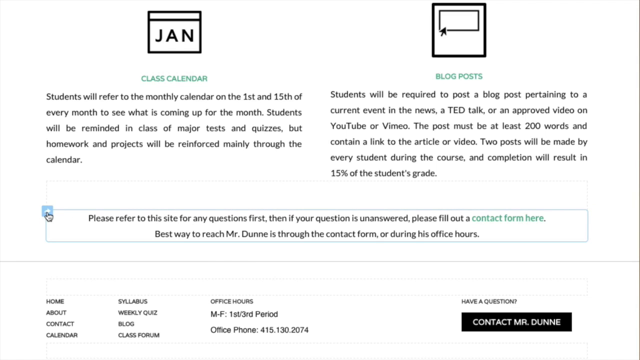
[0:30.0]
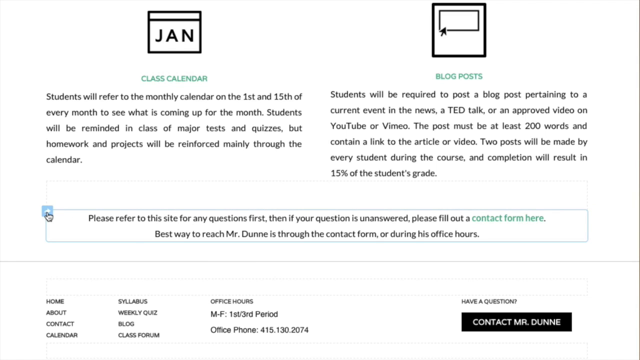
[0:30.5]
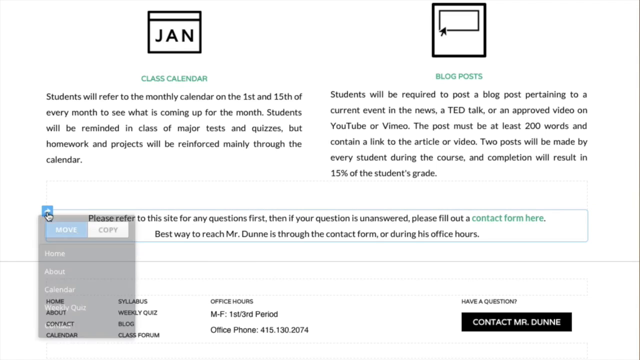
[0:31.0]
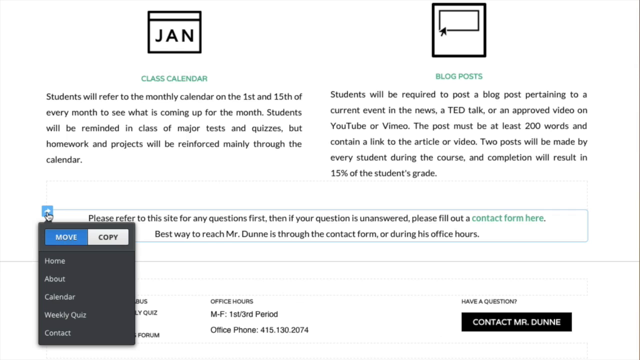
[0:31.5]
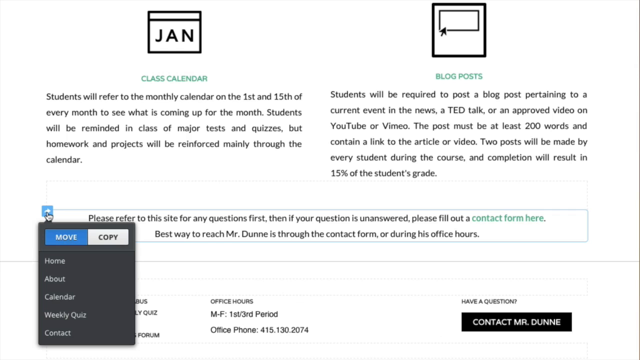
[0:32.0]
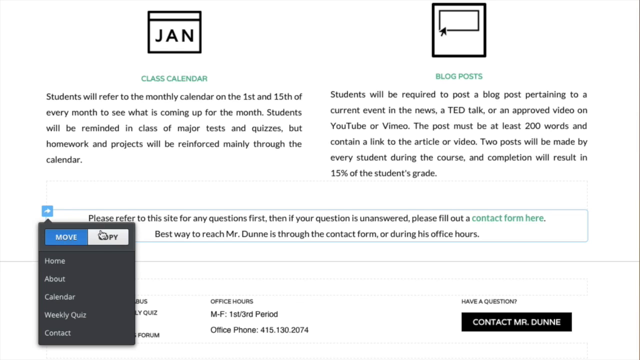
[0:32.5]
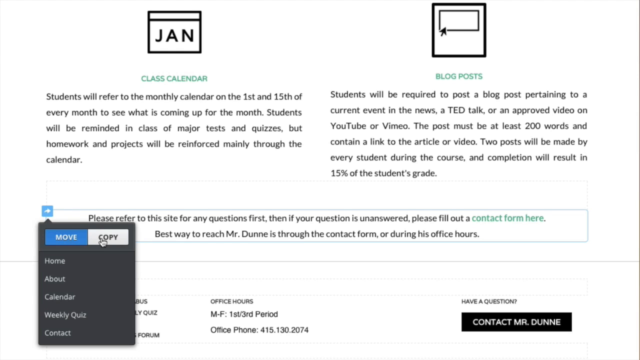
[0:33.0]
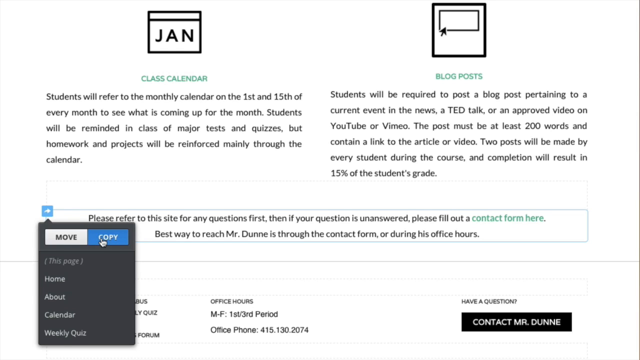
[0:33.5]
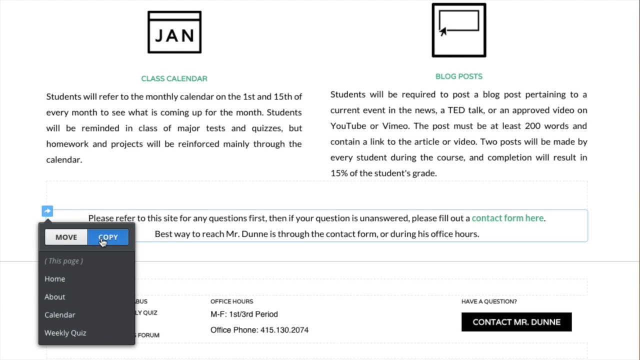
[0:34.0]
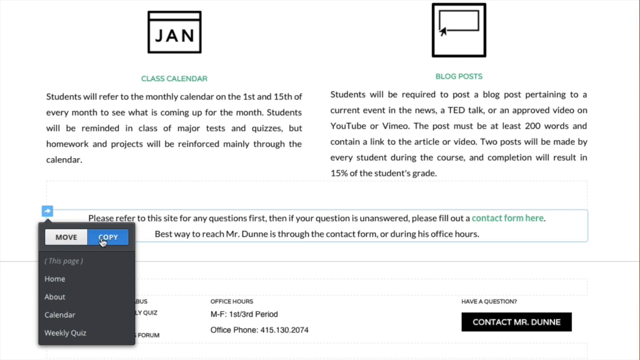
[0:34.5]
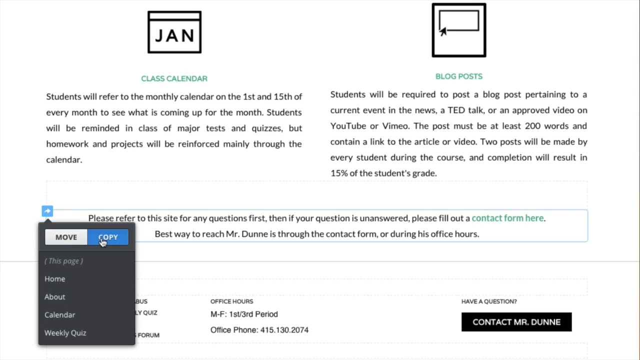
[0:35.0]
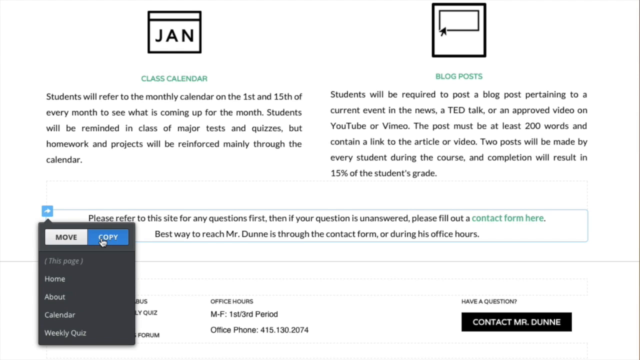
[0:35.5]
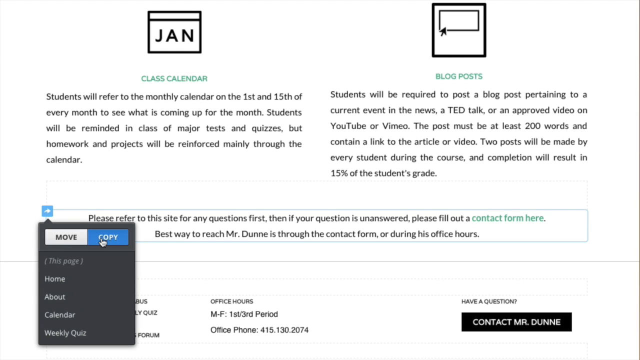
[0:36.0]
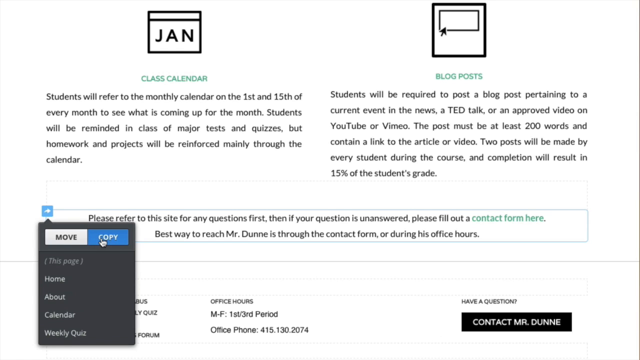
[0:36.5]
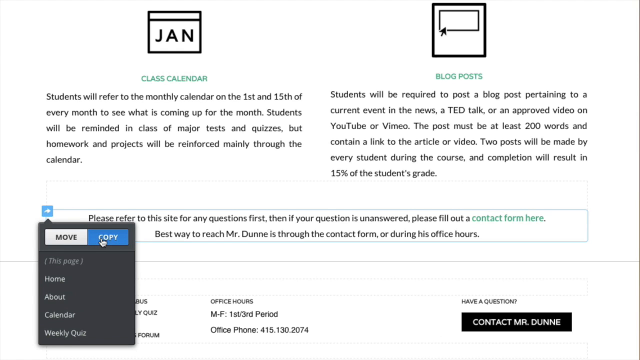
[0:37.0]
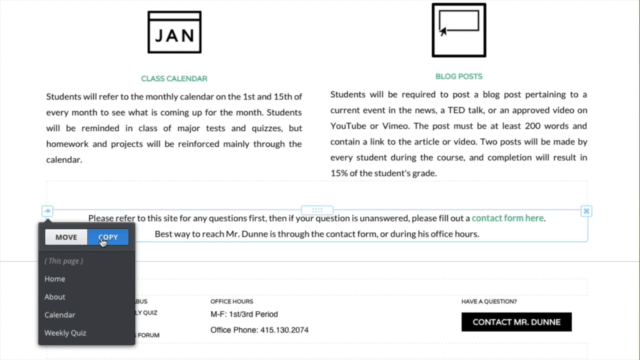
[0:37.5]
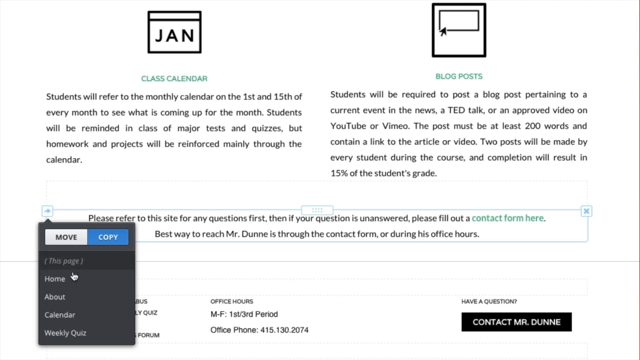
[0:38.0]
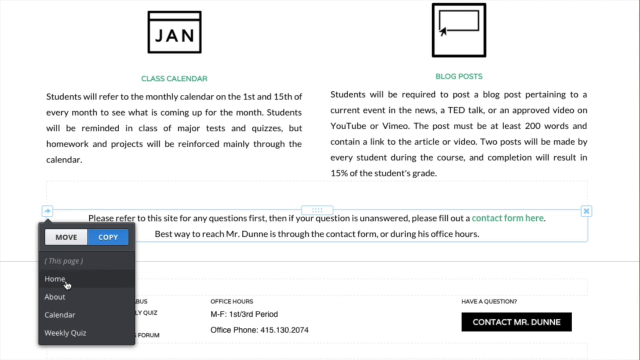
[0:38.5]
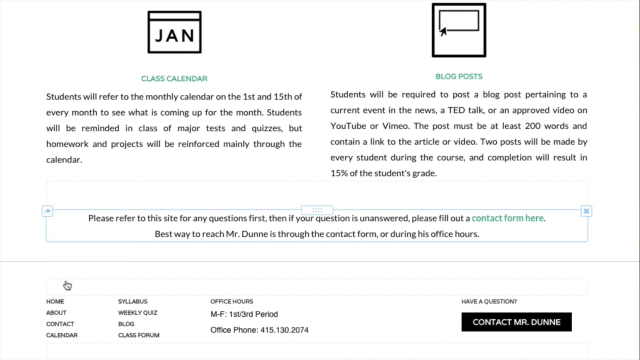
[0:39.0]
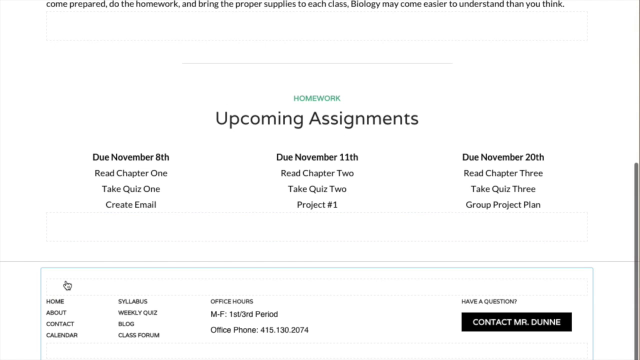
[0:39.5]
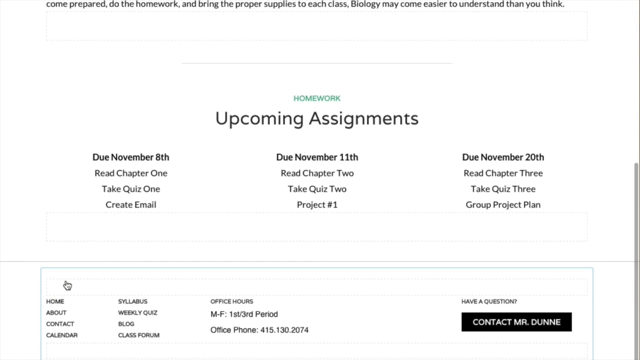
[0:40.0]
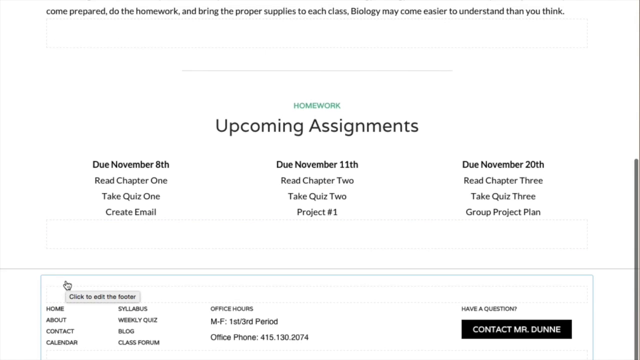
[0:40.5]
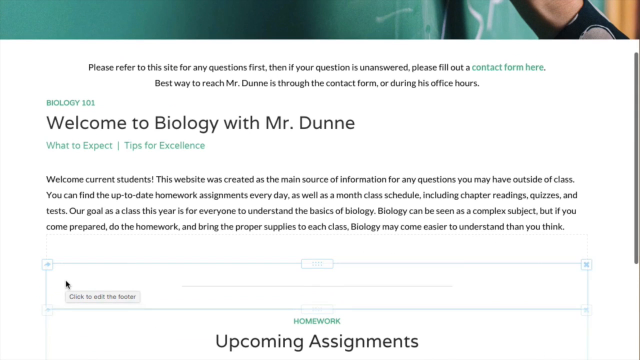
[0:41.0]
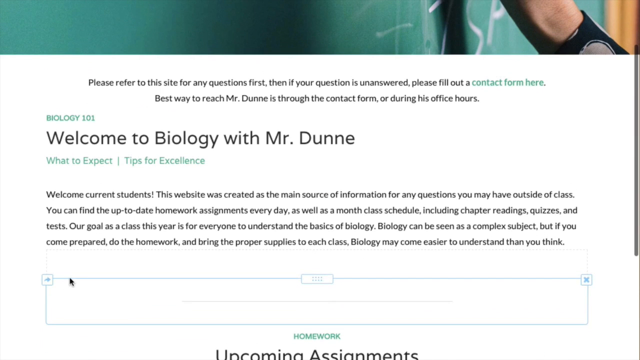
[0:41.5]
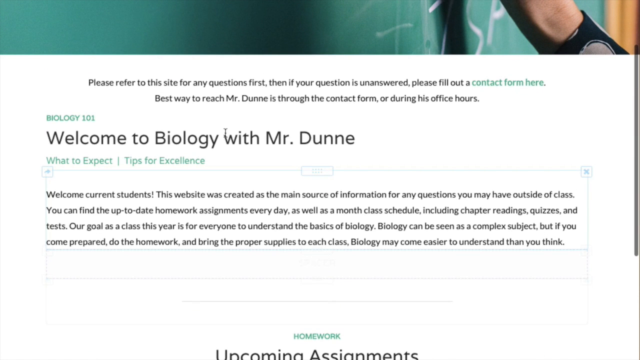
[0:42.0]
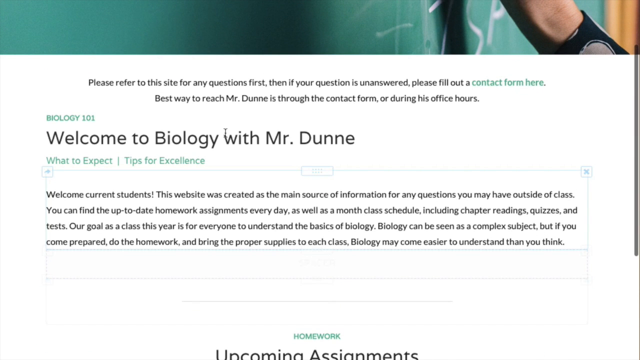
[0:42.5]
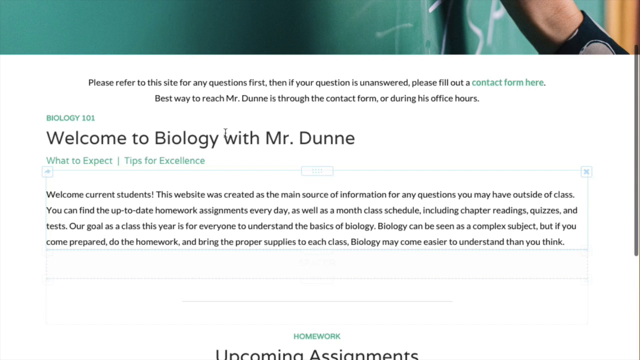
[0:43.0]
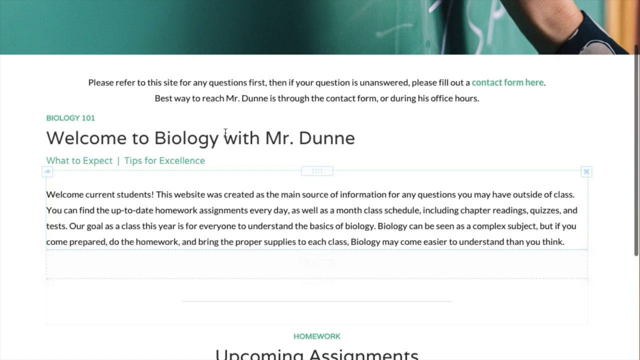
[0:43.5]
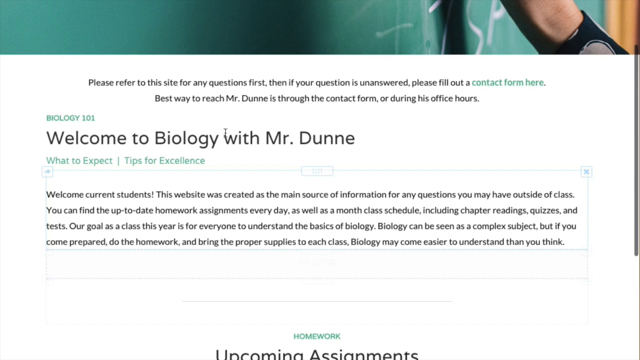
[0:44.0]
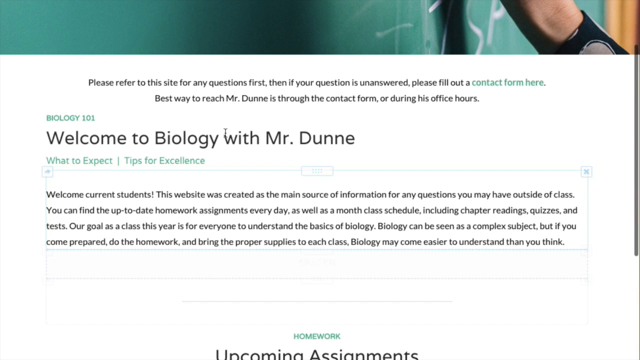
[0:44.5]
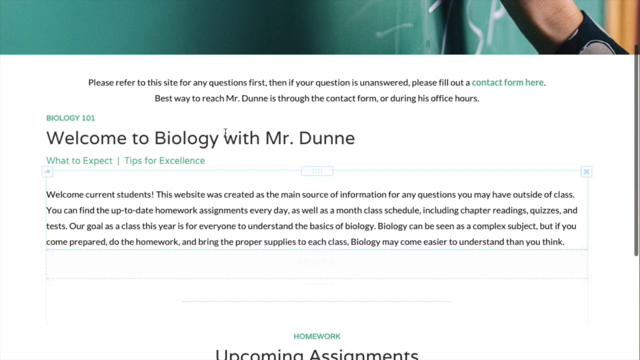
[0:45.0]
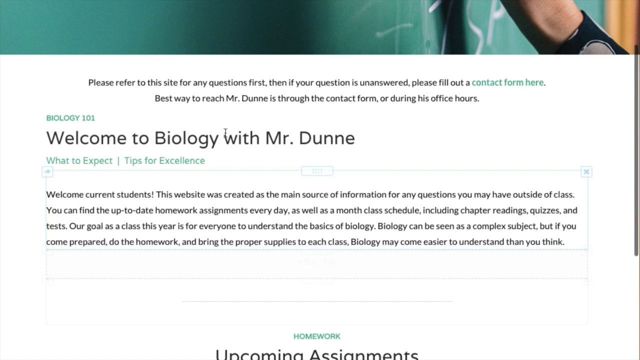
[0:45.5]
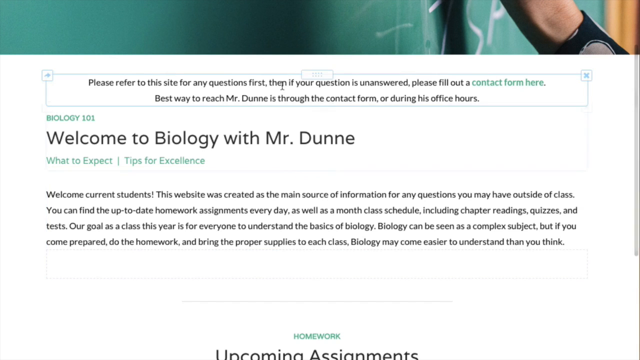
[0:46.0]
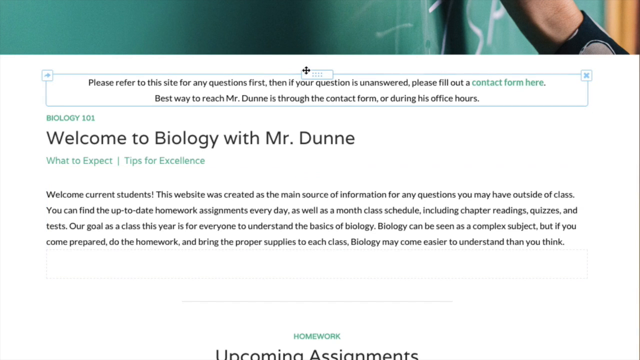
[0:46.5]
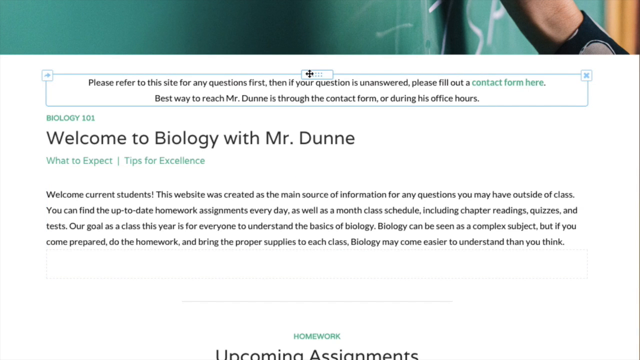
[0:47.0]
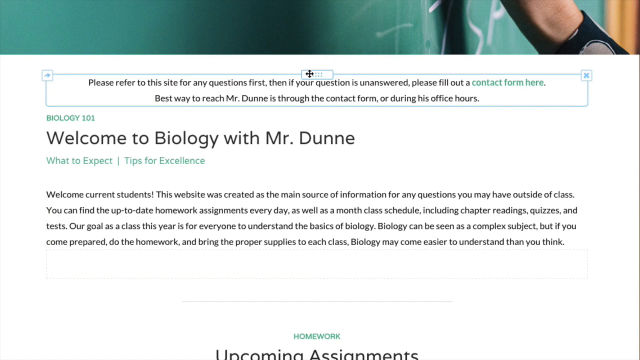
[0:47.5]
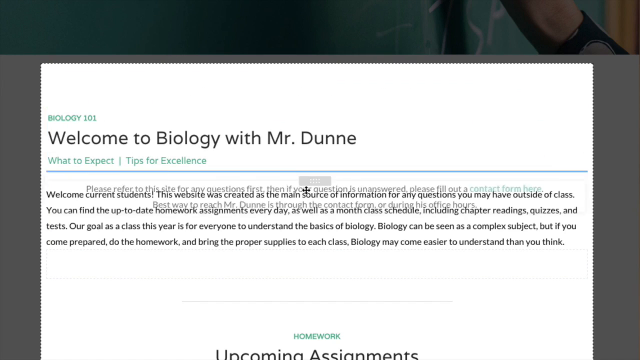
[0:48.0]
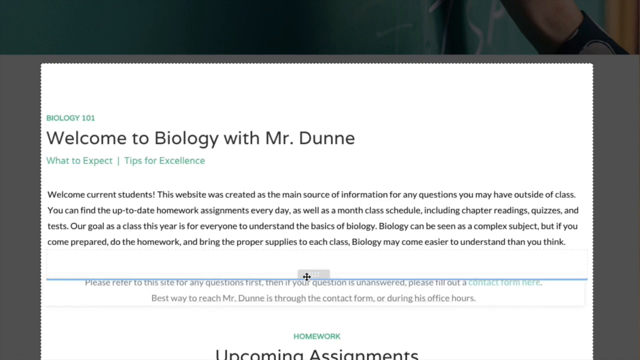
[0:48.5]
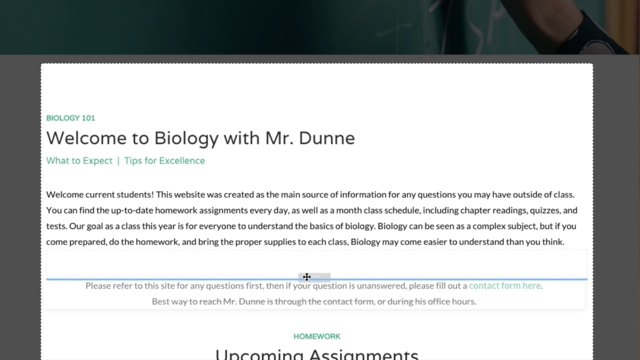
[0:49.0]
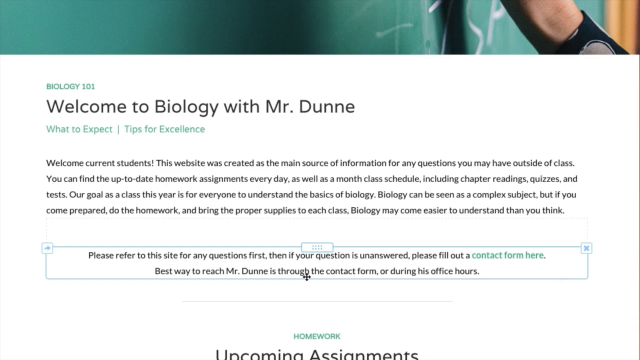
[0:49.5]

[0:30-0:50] The page is a class calendar with a blog post of upcoming assignments. A hand is on a green board, writing, with "biology" shown. No person, animals or activities appear; only the assignment is shown.